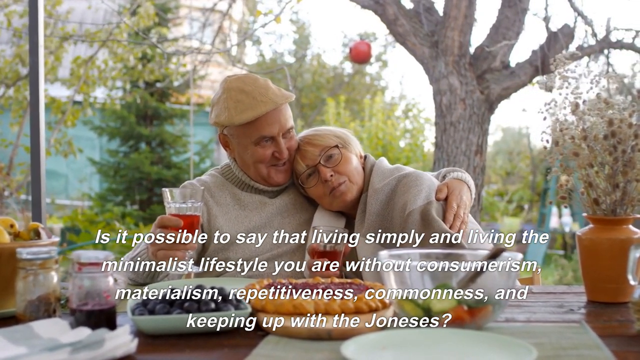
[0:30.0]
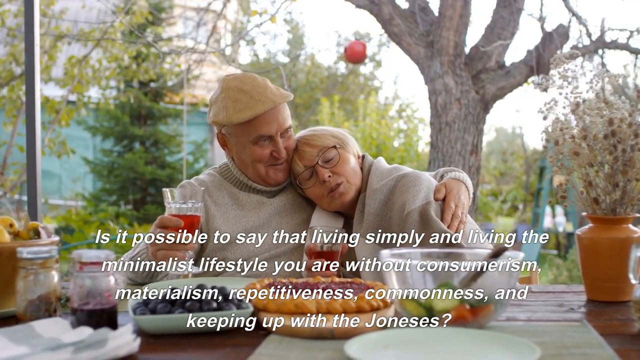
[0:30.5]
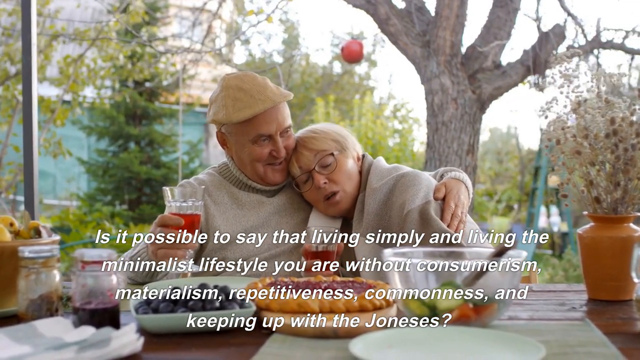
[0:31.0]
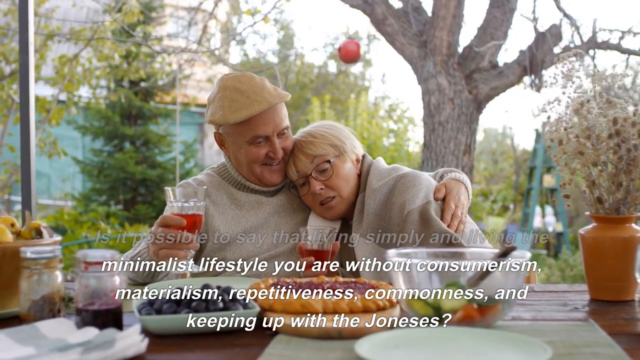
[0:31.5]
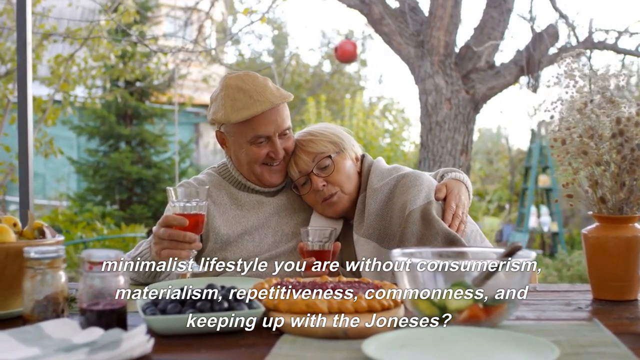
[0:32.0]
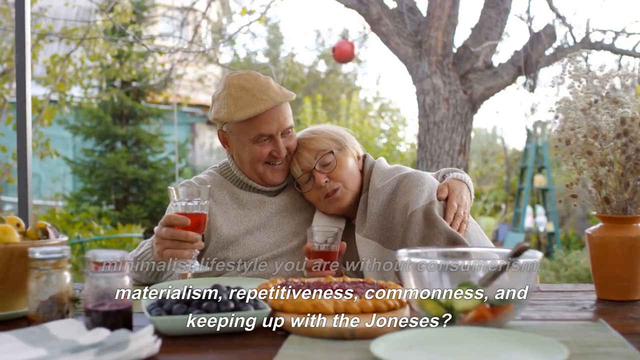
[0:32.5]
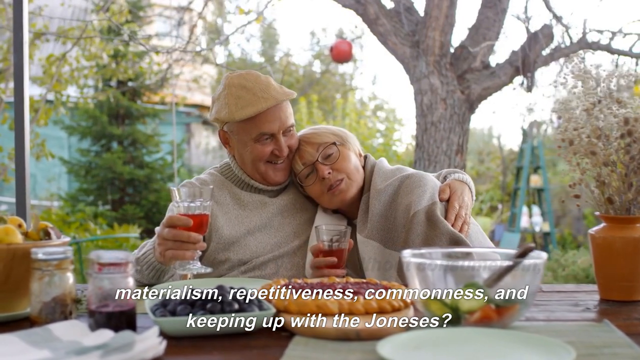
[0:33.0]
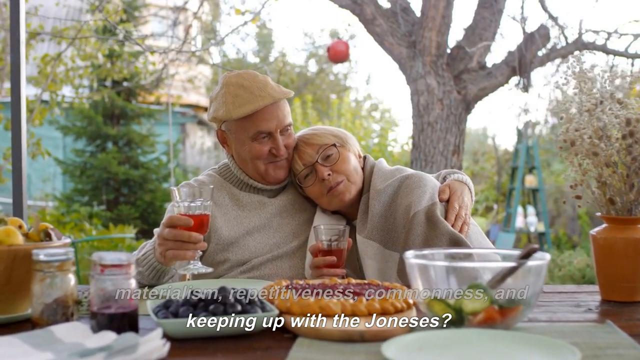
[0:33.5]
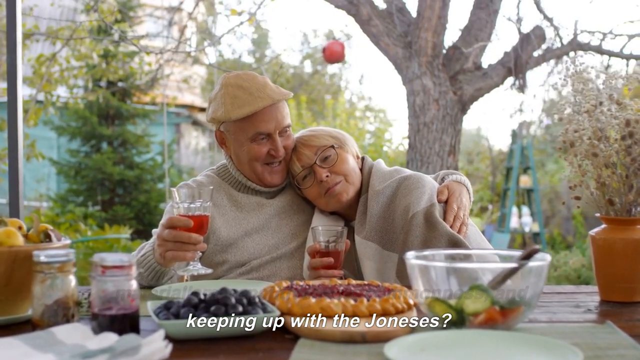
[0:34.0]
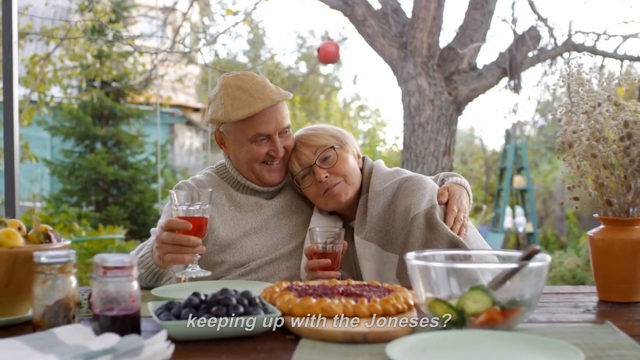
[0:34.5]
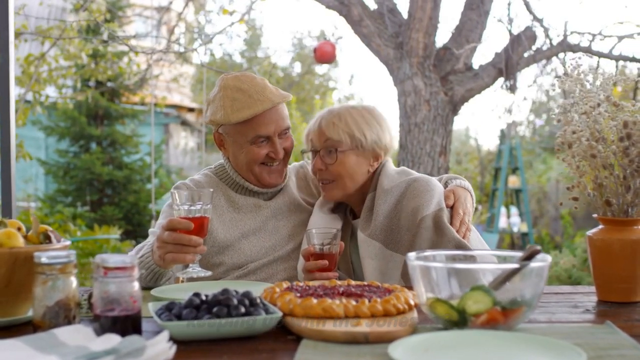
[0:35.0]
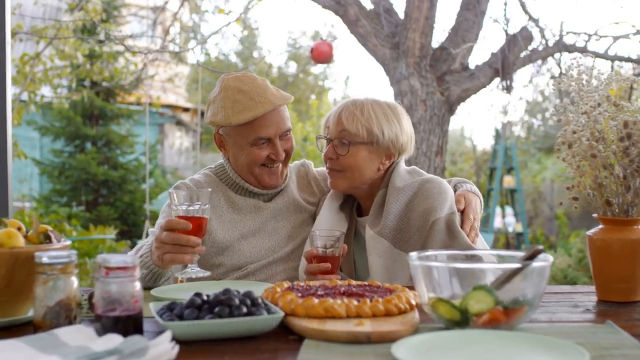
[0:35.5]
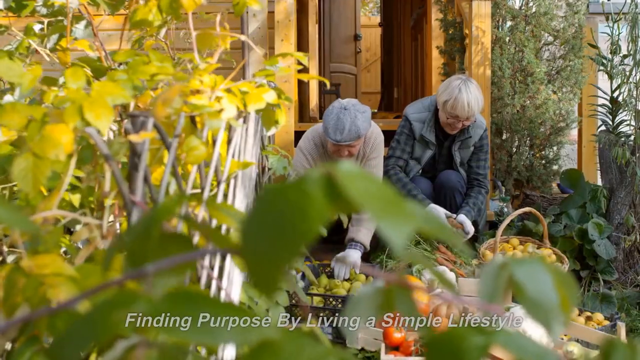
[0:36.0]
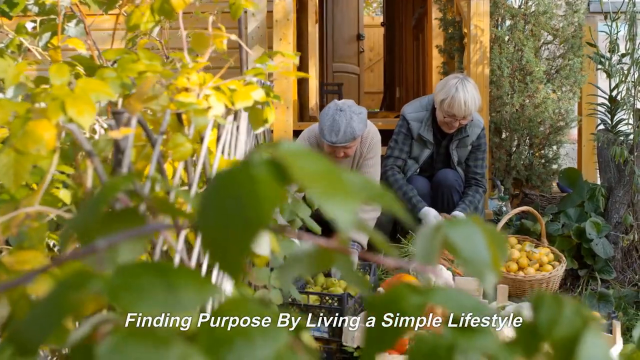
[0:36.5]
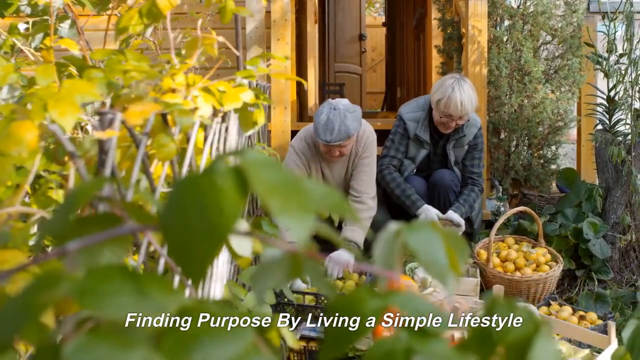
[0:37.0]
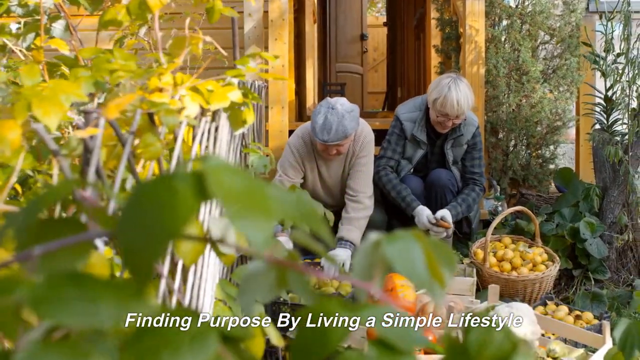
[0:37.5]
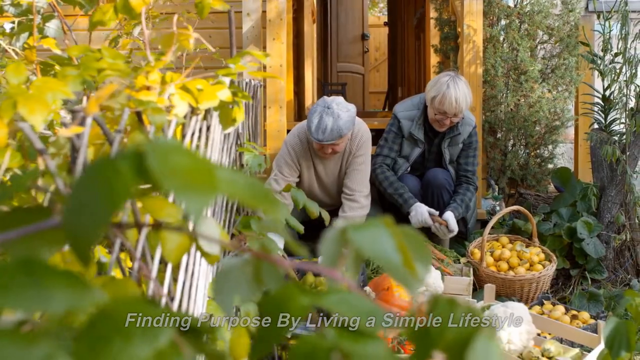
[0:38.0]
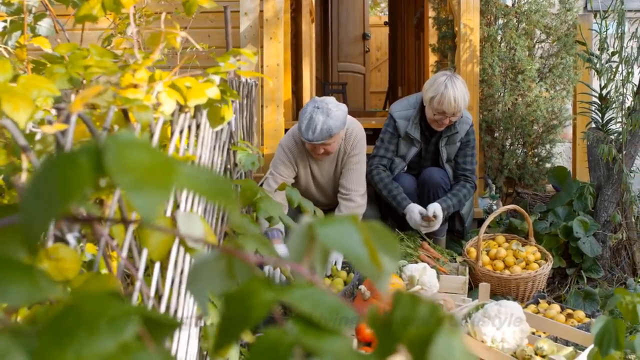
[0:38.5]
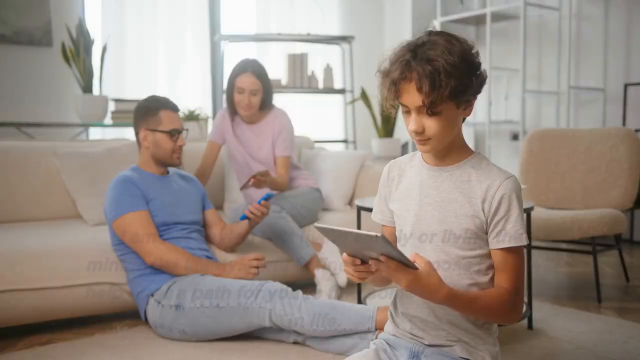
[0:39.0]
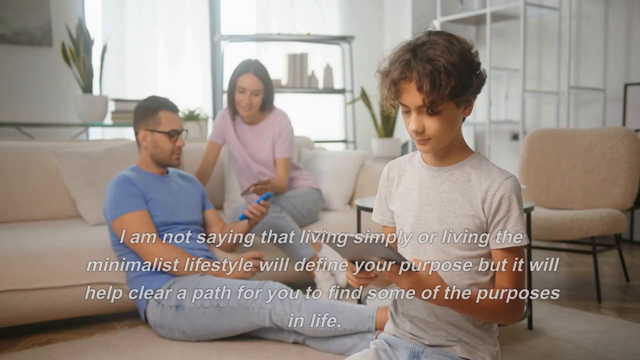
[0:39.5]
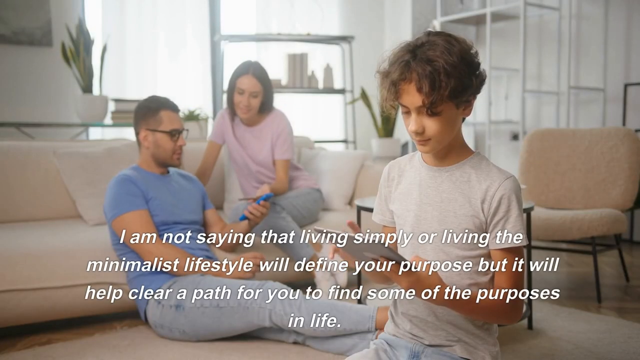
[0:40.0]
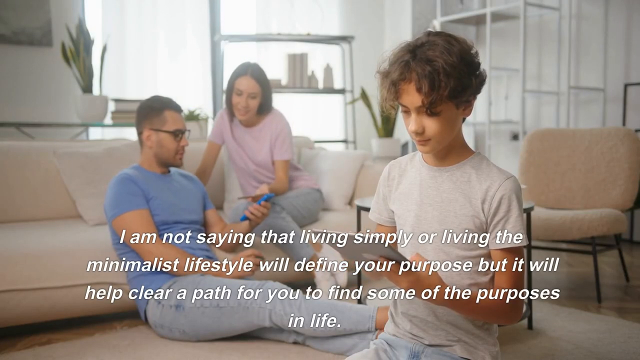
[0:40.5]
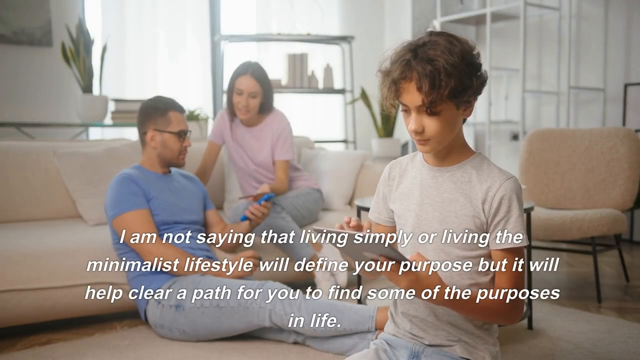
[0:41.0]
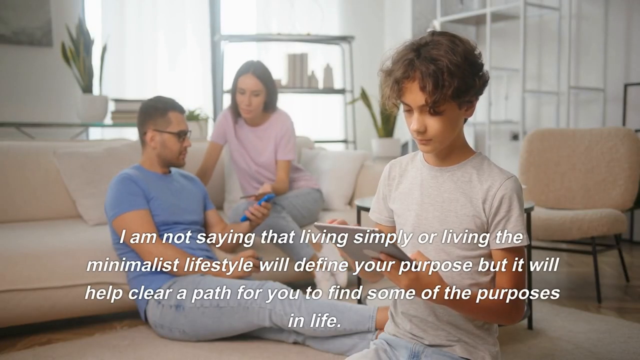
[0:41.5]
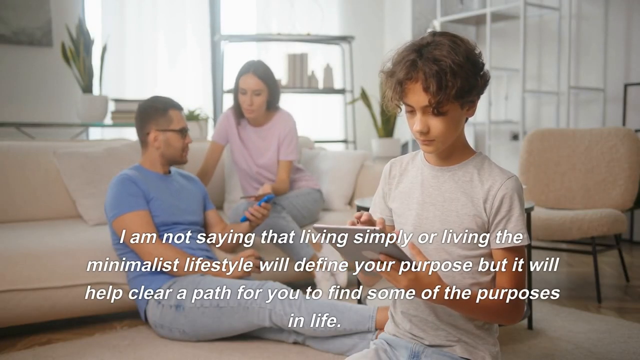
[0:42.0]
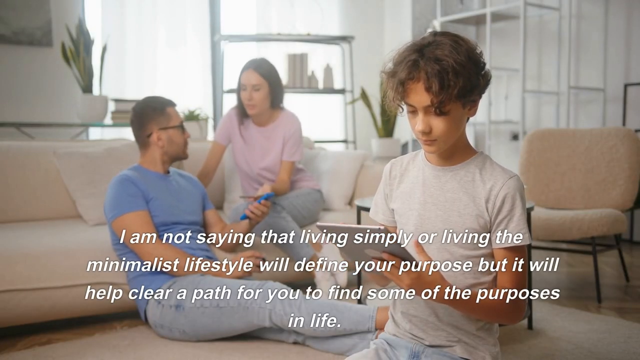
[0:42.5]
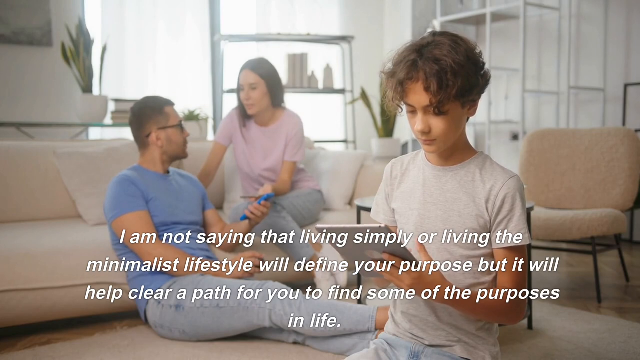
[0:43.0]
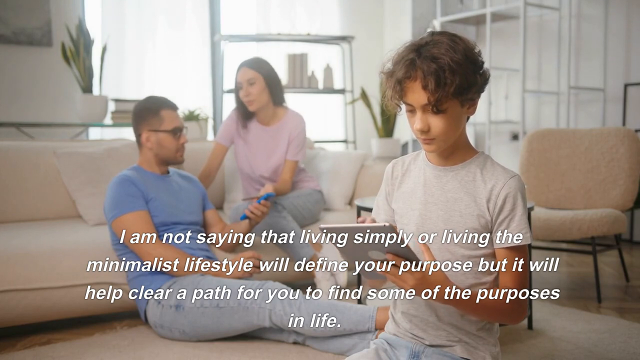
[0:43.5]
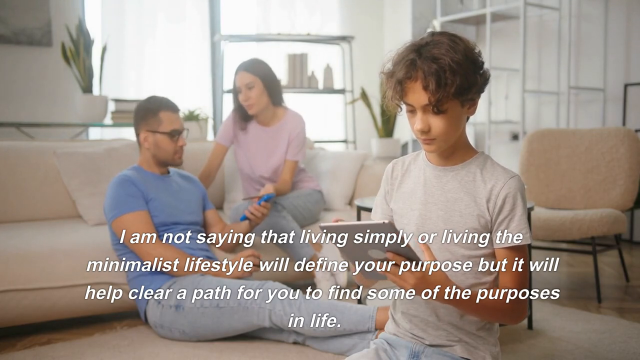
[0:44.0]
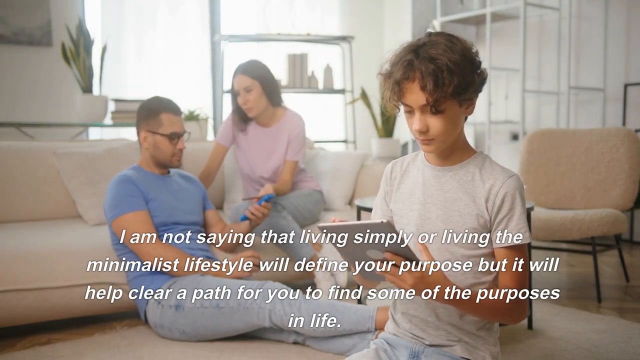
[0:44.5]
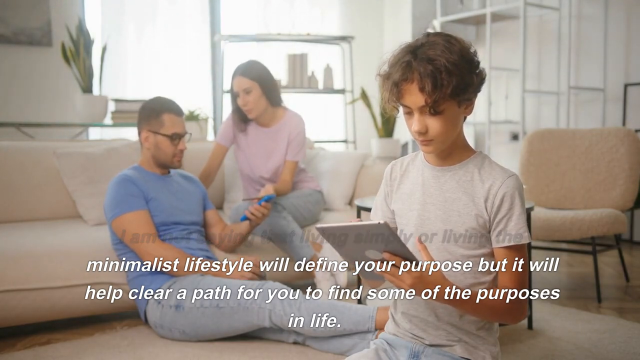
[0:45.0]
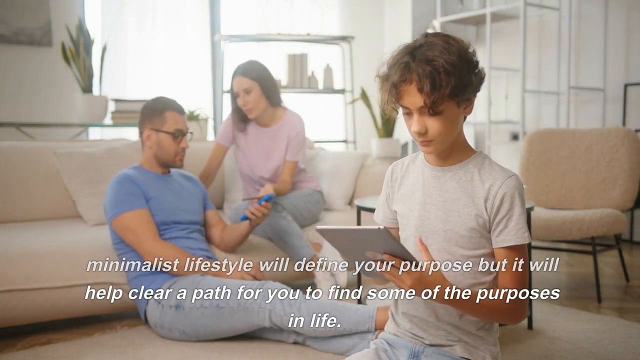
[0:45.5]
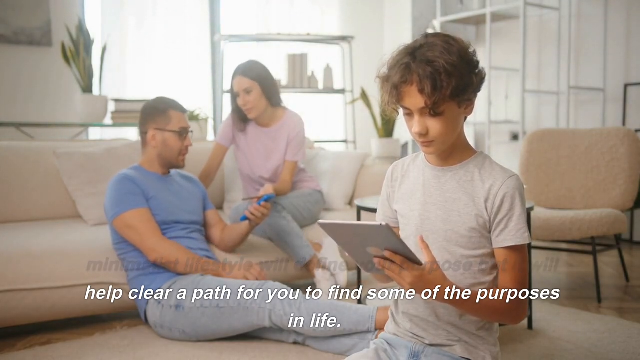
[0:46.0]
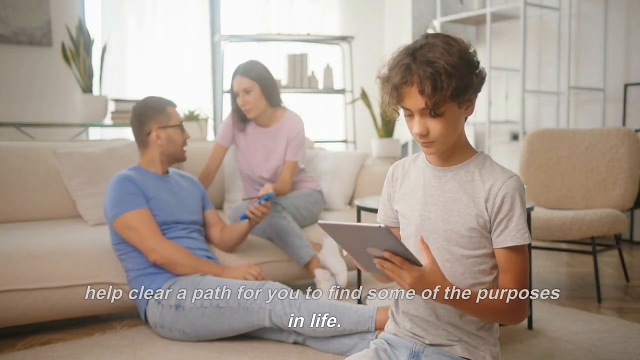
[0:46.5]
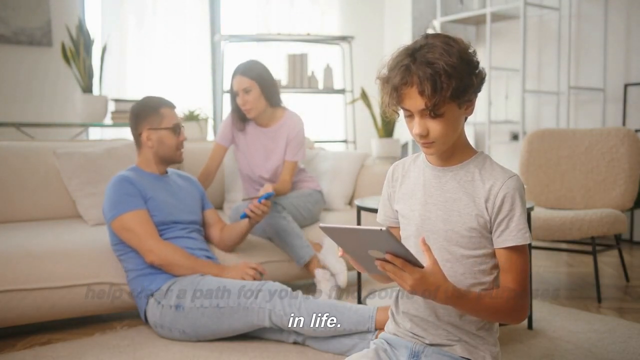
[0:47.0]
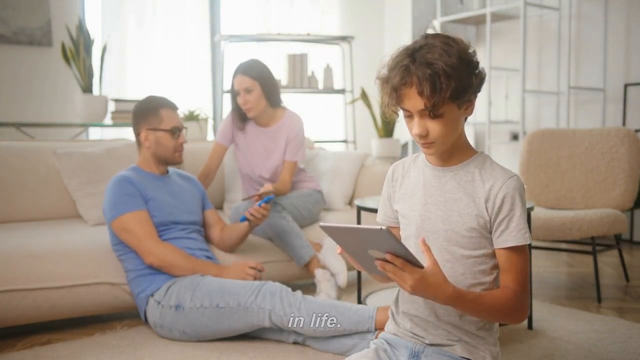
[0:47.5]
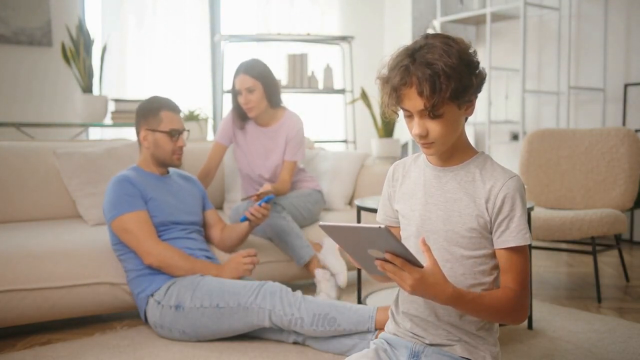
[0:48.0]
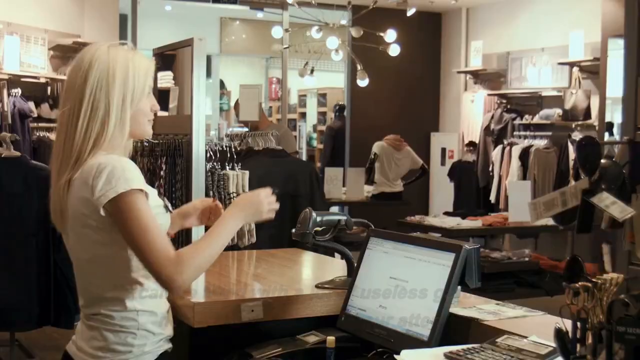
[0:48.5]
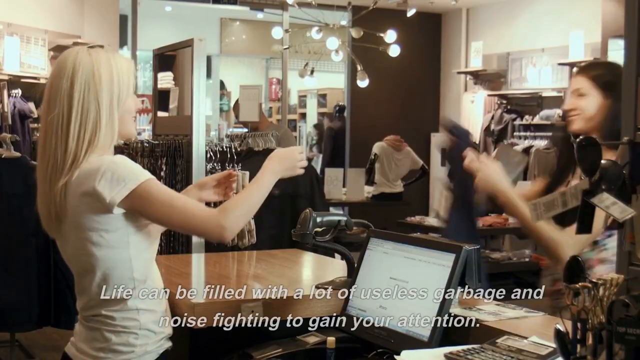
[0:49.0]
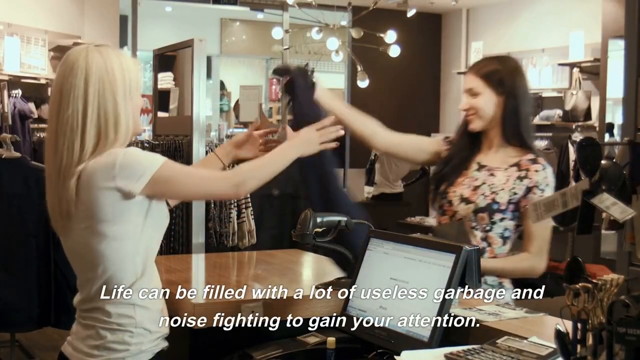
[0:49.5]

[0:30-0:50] The elderly couple is still having their lunch and looks relaxed and happy. The scene switches to another elderly couple sitting on the doorstep of their house, tidying some newly delivered fruit. Next, a family of a couple and their child, who appears to be about 11 or 12, is sitting in a minimalist beige and white living room, using phones and tablets. A caption says: "I am not saying that living simply or living the minimalist lifestyle will define your purpose, but it will help clear a path for you to find some of the purposes in life." The scene then switches to what looks like a women's clothing shop, where a blonde shop assistant receives an item from a dark-haired customer. The caption reads: "life can be filled with a lot of useless garbage and noise fighting to gain your attention."